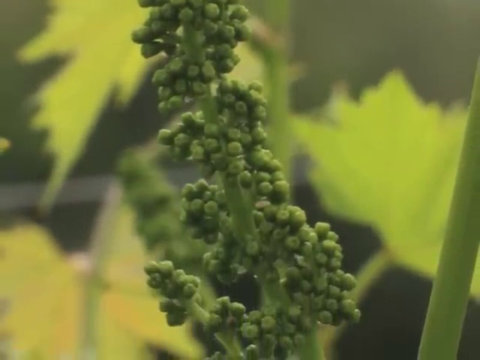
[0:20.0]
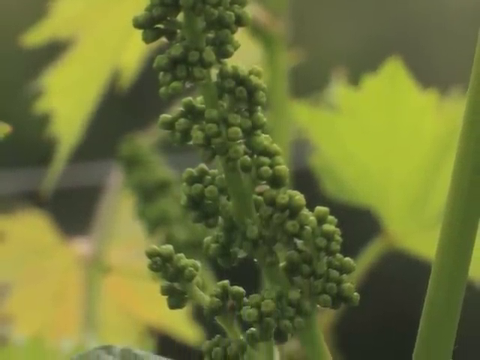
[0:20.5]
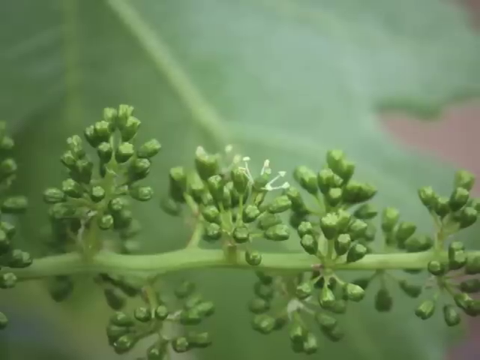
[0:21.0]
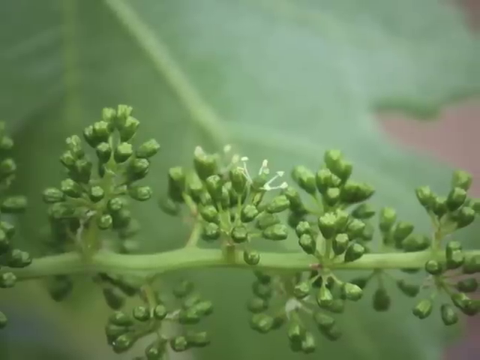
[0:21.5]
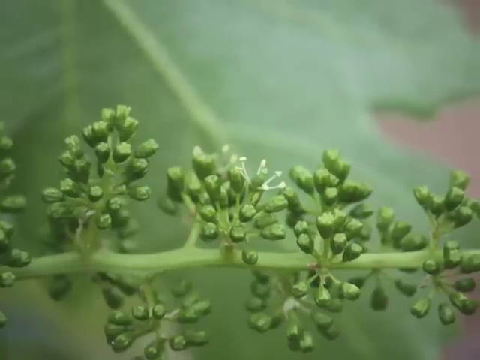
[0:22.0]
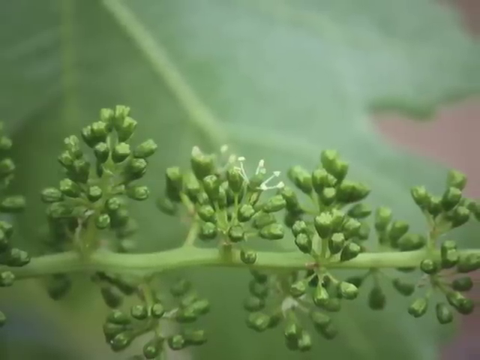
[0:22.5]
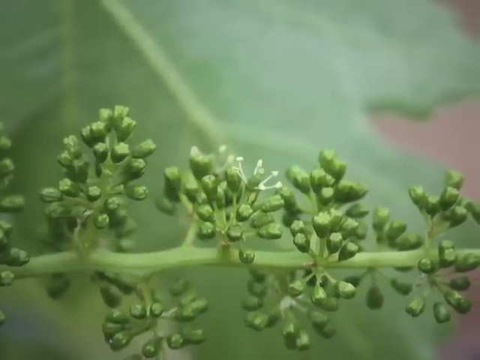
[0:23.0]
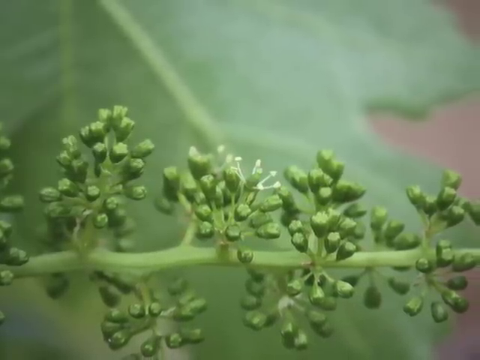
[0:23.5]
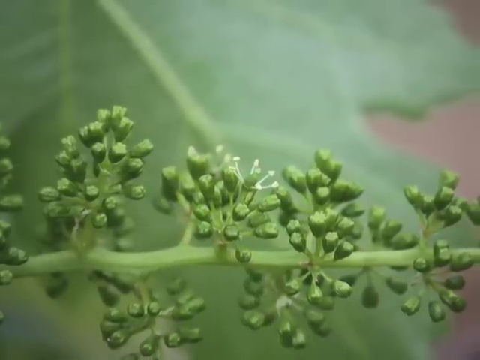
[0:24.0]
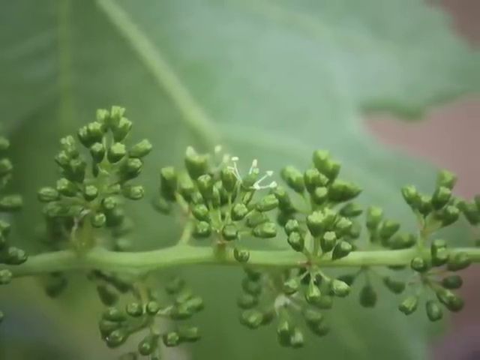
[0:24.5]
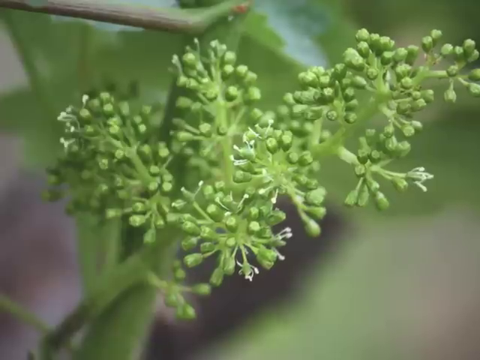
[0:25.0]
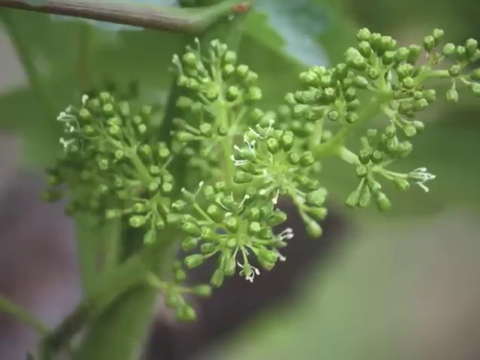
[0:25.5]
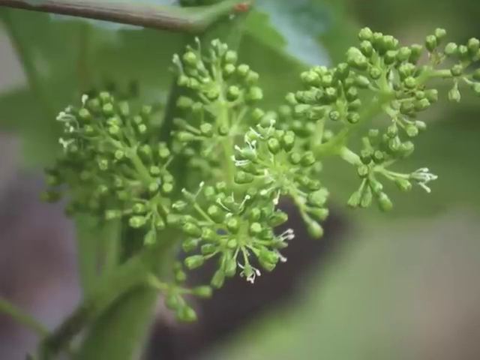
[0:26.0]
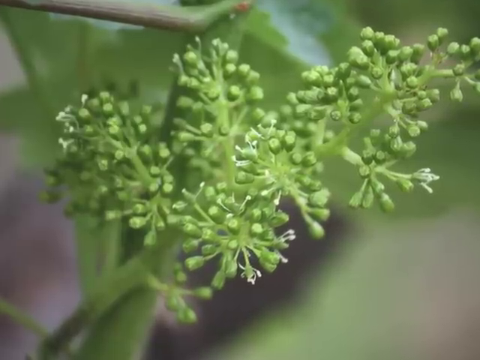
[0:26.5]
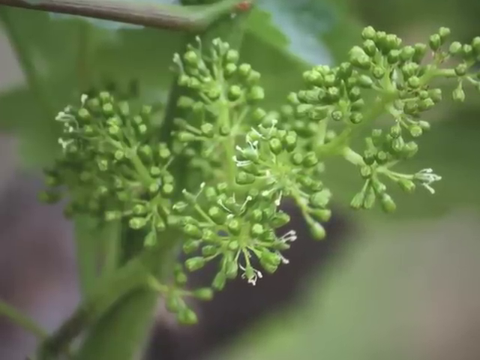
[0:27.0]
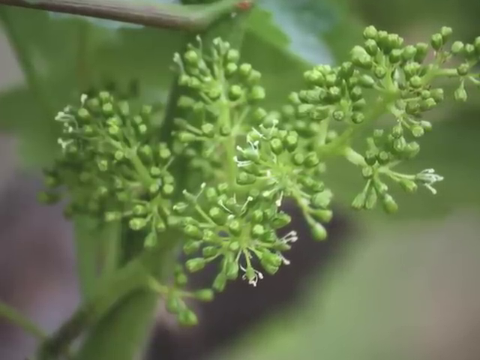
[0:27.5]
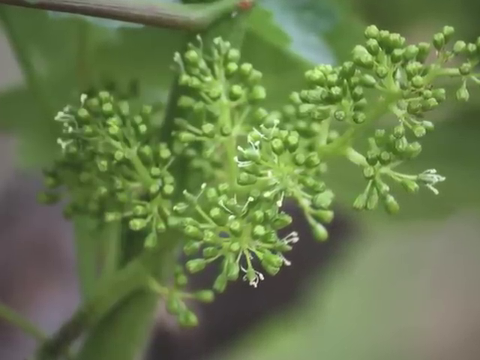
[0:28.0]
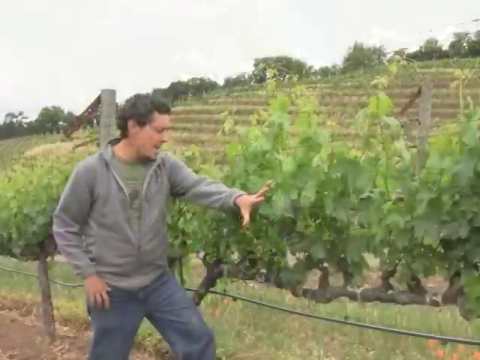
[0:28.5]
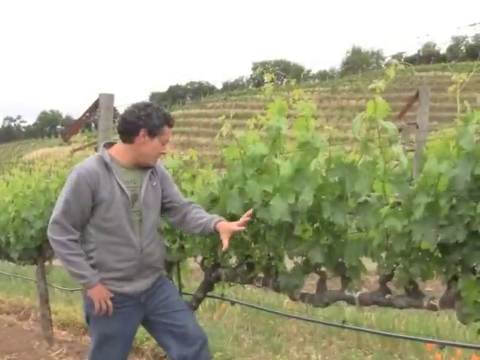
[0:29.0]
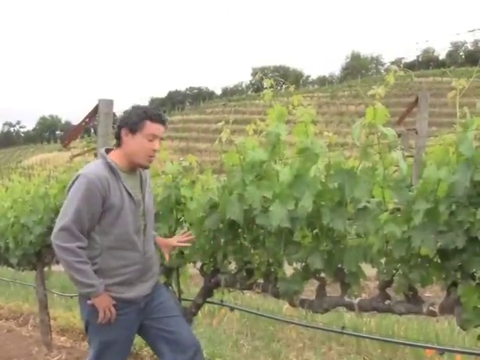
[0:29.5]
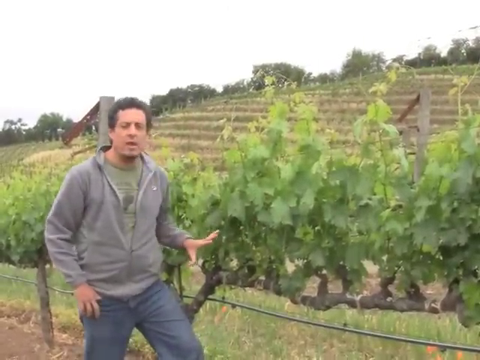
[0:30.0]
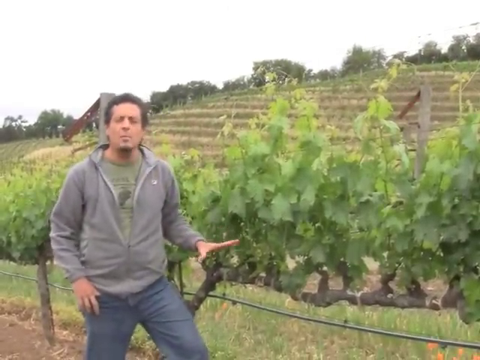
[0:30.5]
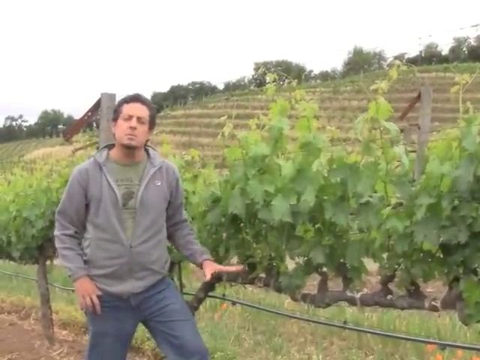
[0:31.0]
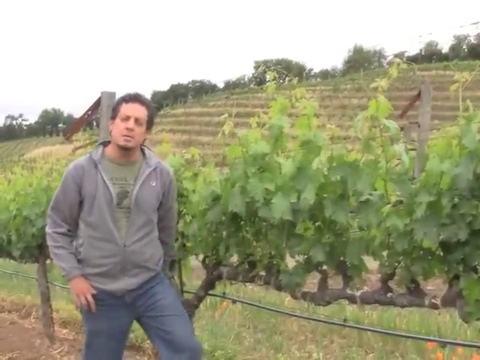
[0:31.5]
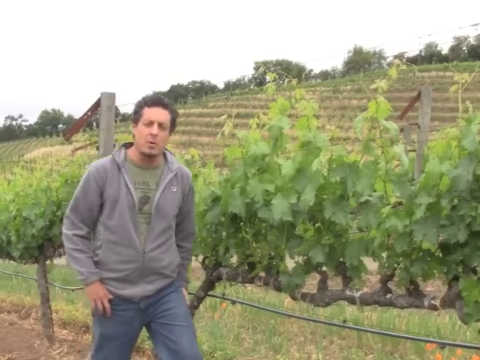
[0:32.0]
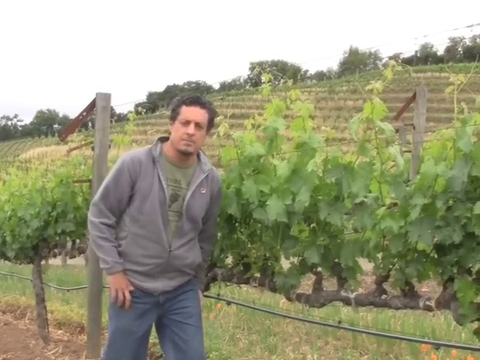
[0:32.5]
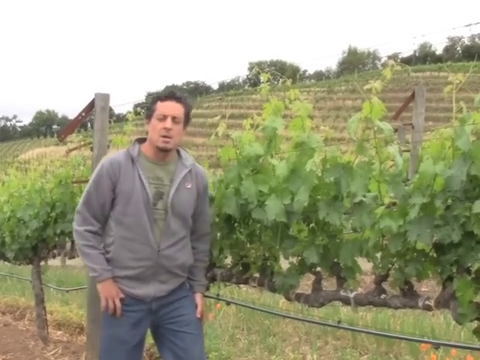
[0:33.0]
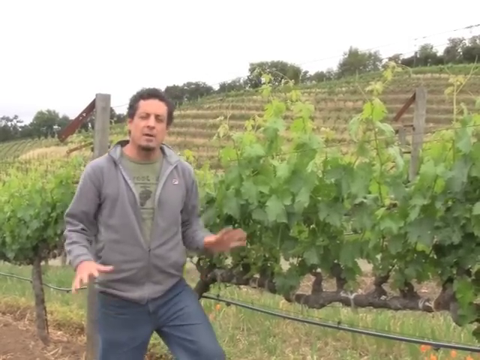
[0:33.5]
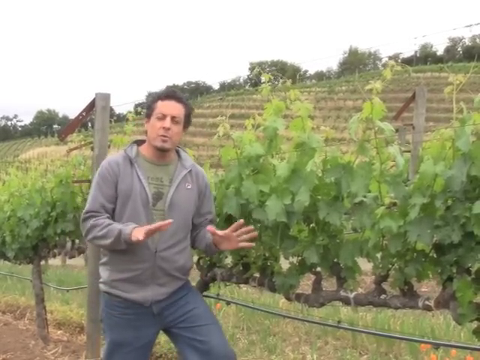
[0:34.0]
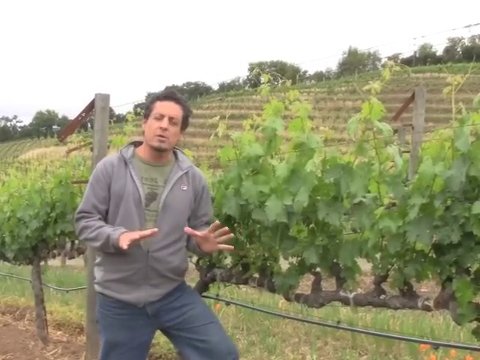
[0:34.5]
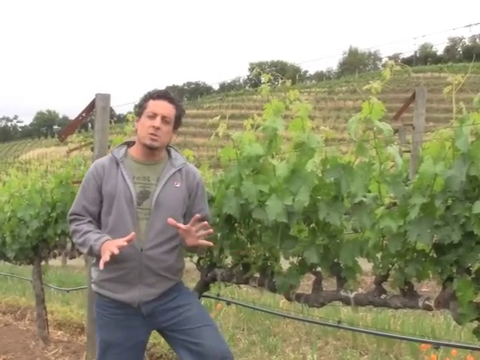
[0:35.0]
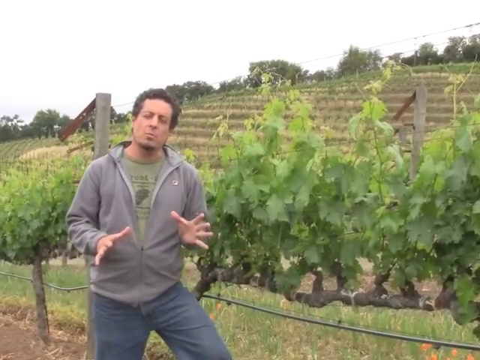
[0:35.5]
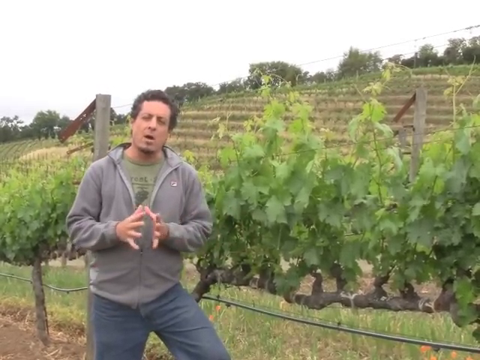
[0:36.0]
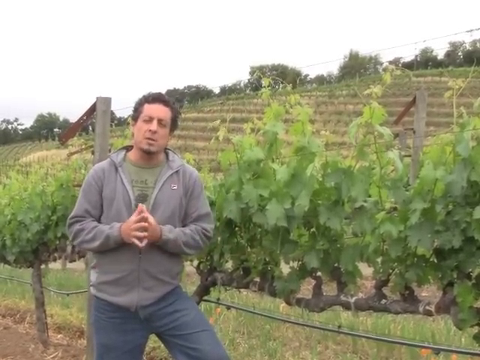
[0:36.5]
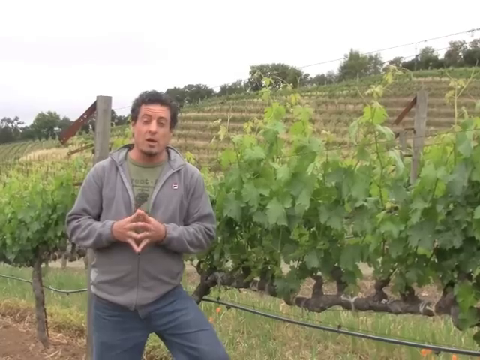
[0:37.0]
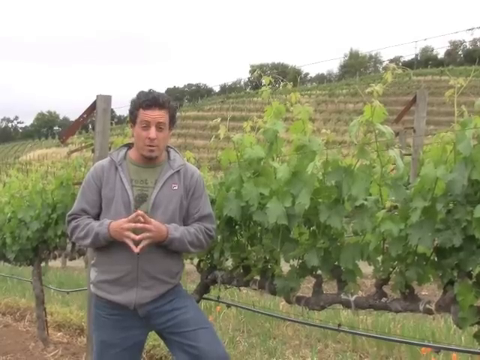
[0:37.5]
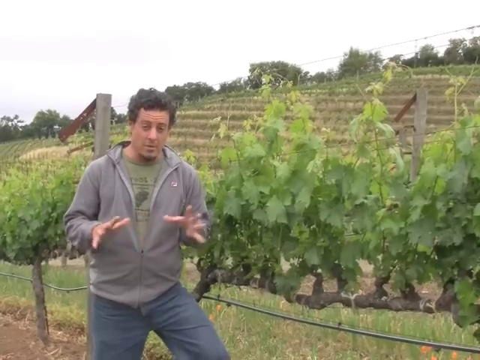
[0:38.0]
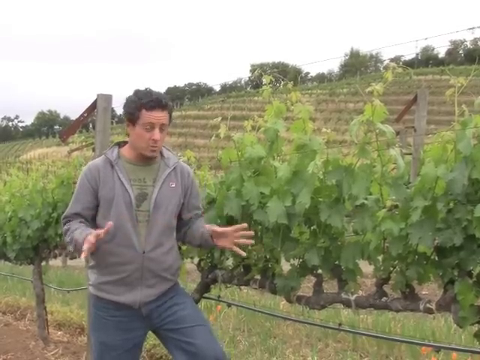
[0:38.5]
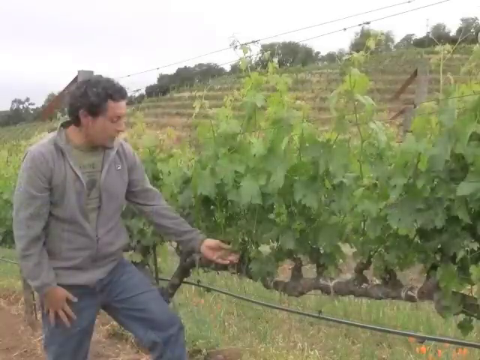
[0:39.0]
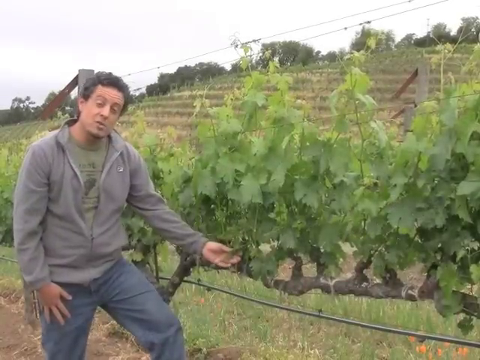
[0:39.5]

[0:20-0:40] The video highlights the growth stages of plants in the vineyard, focusing on the grapes in their early stages of development: all the little stems they grow off of and how small they are. The grapes look almost like little green peas, without any grape characteristics yet. The shot returns to the man standing in front of the plant, still wearing a gray zip-up hoodie, blue jeans, and a green shirt; he has curly black hair. He waves his hand around the plant while apparently talking about it, his hands moving in front of him as he describes things. It cuts again to him standing there touching one of the leaves. In the background the rolling hill is still visible, with many plants on it from the winery.